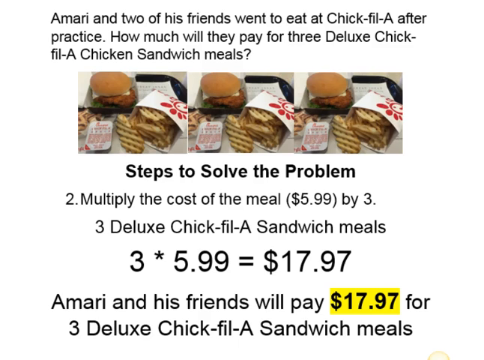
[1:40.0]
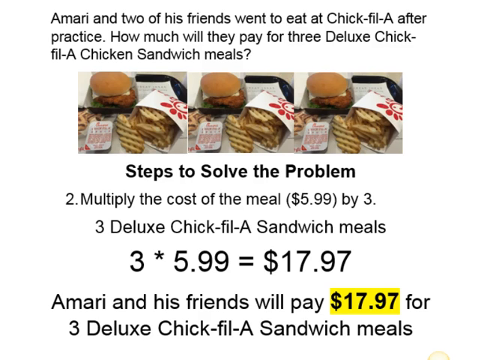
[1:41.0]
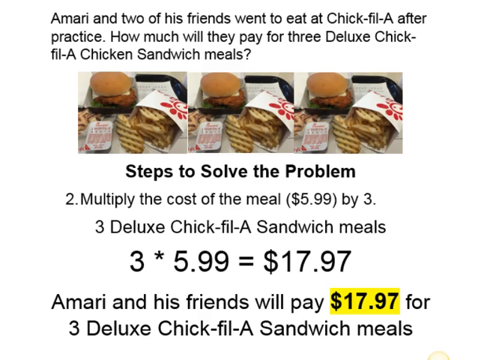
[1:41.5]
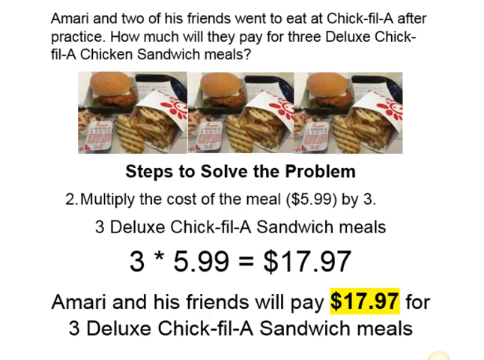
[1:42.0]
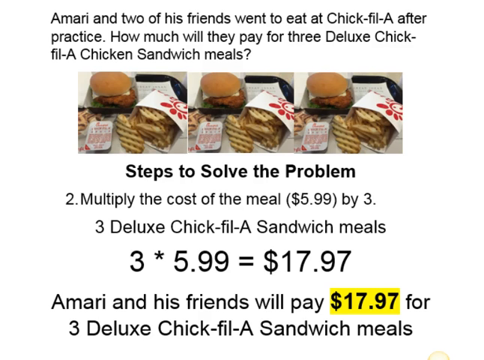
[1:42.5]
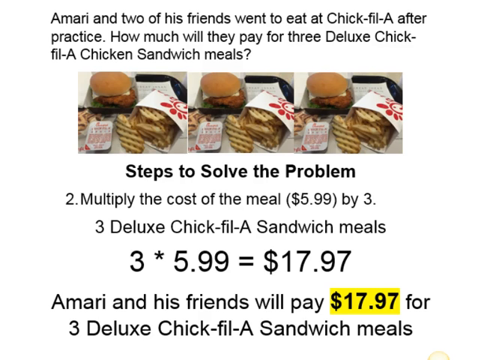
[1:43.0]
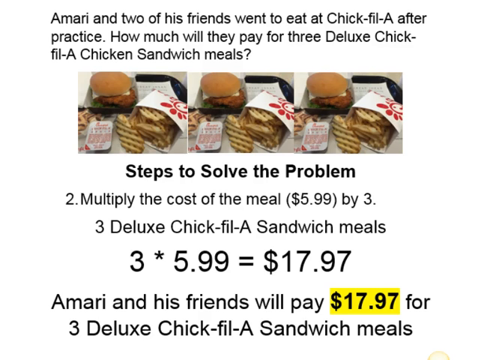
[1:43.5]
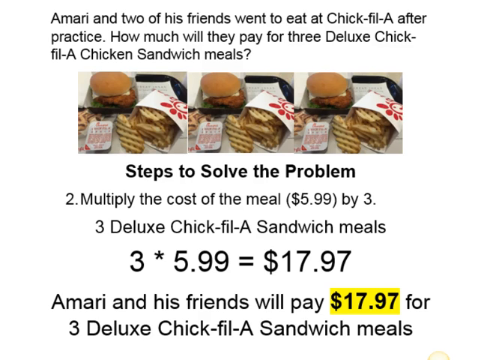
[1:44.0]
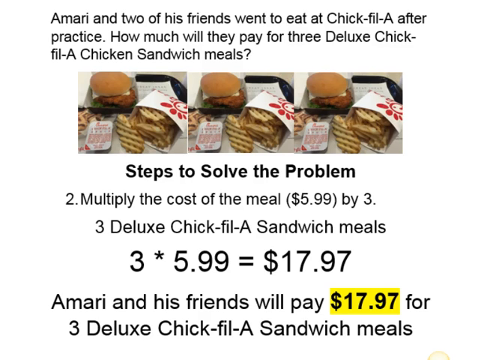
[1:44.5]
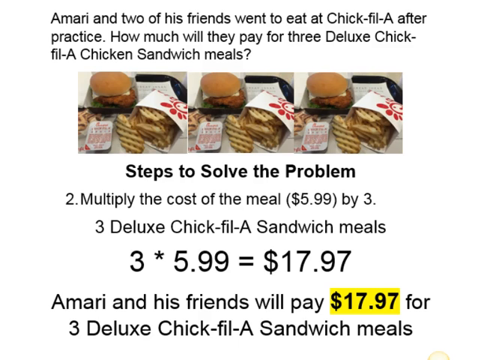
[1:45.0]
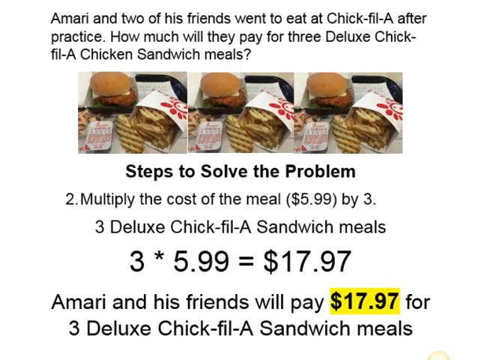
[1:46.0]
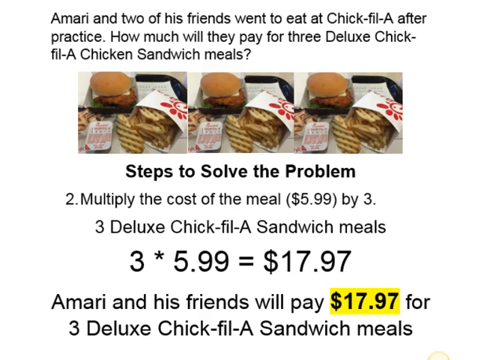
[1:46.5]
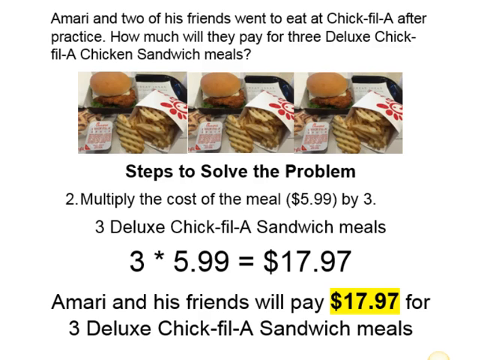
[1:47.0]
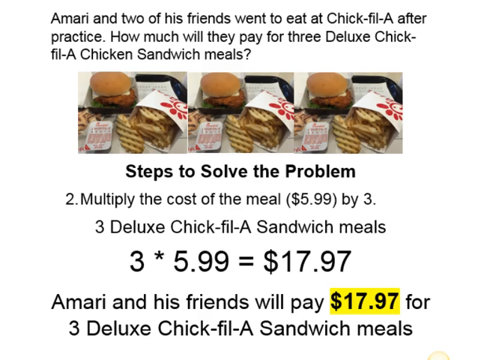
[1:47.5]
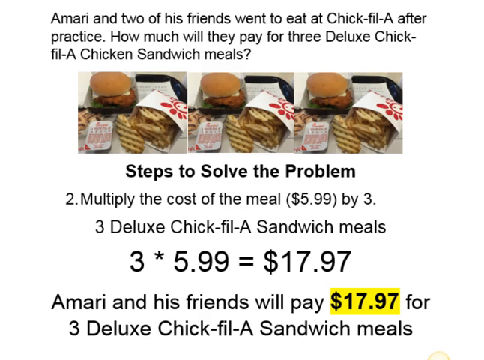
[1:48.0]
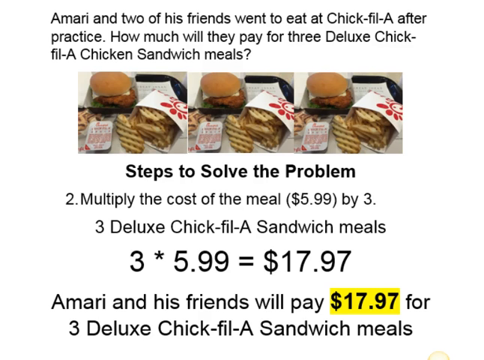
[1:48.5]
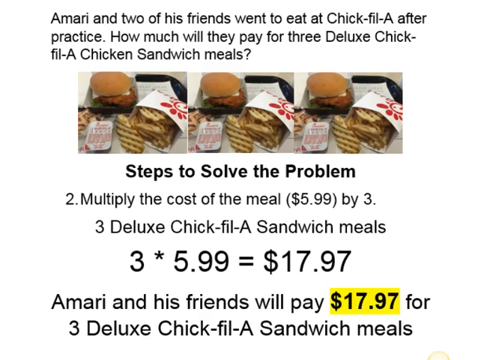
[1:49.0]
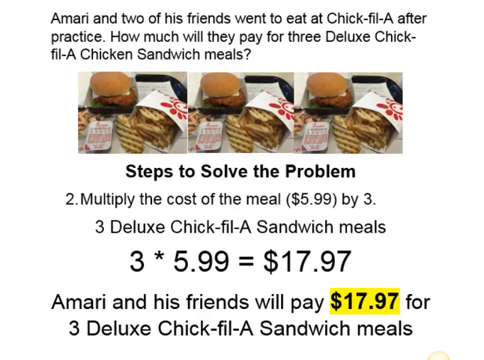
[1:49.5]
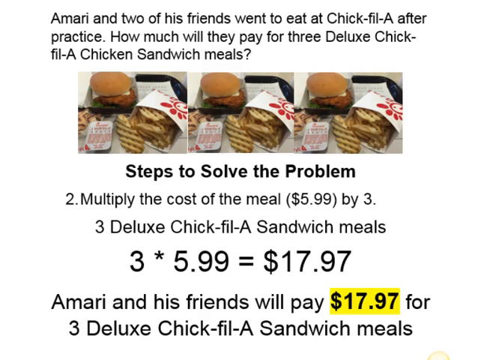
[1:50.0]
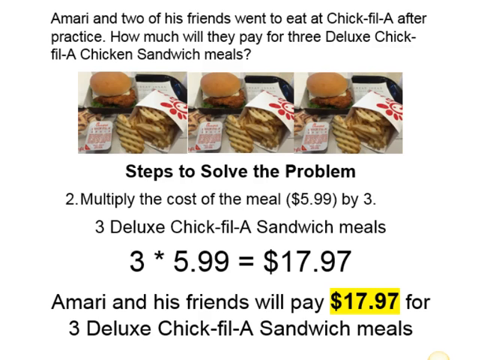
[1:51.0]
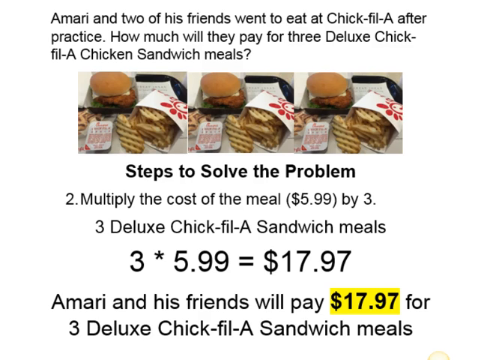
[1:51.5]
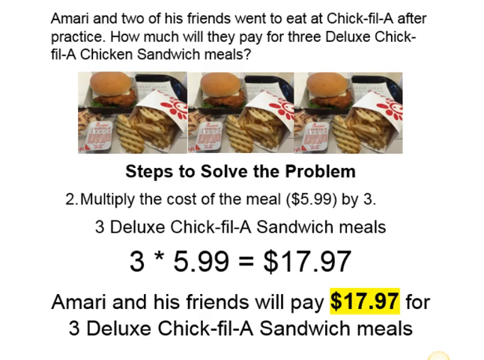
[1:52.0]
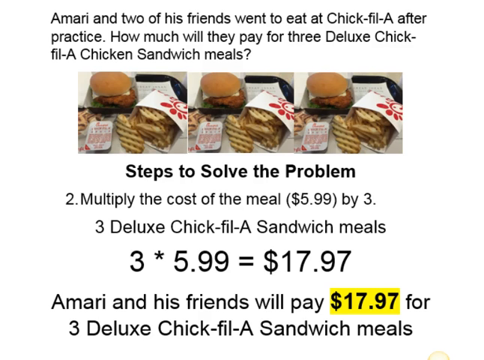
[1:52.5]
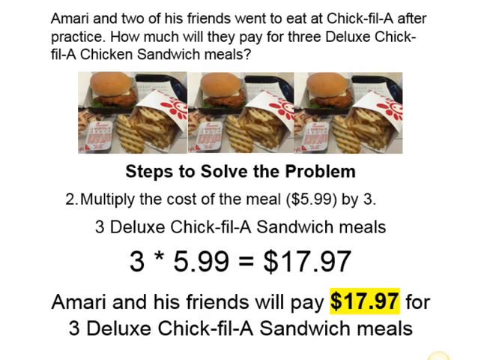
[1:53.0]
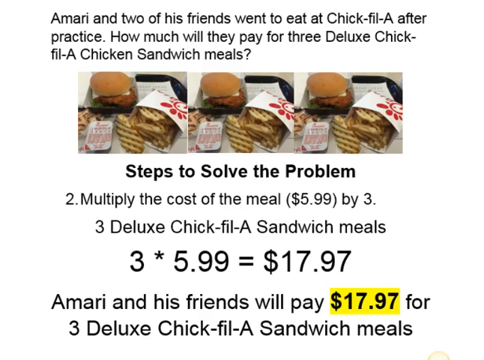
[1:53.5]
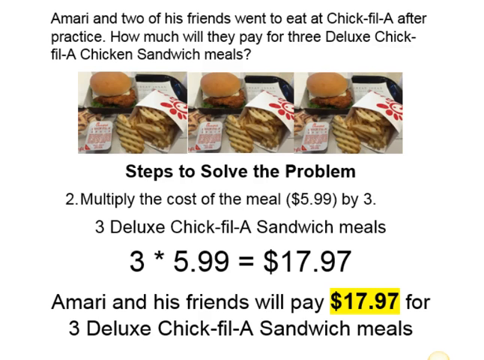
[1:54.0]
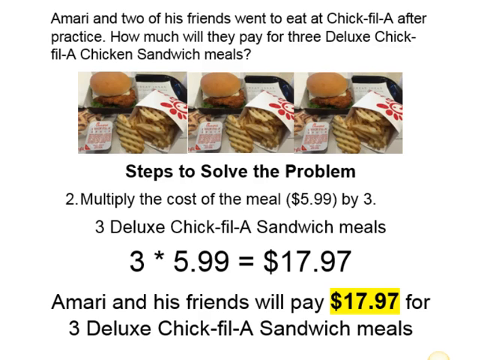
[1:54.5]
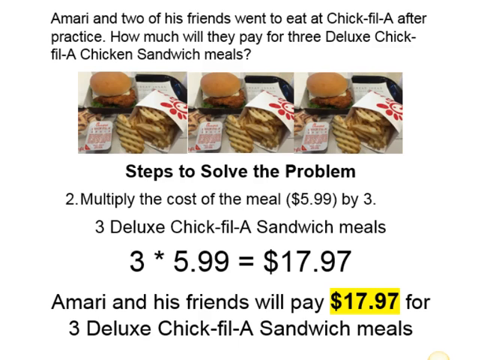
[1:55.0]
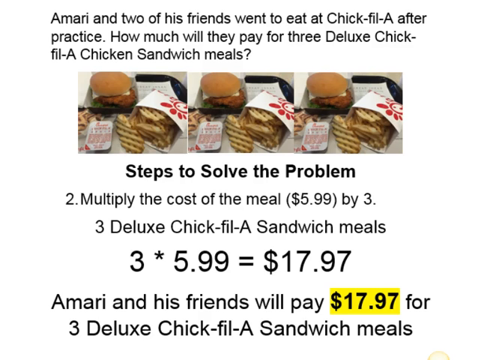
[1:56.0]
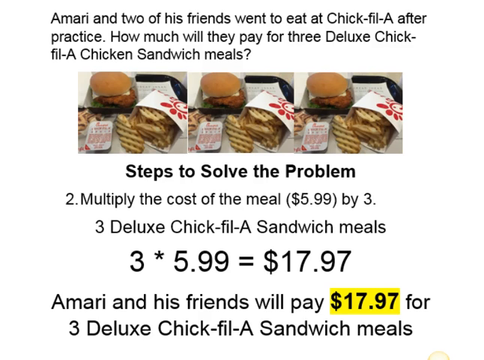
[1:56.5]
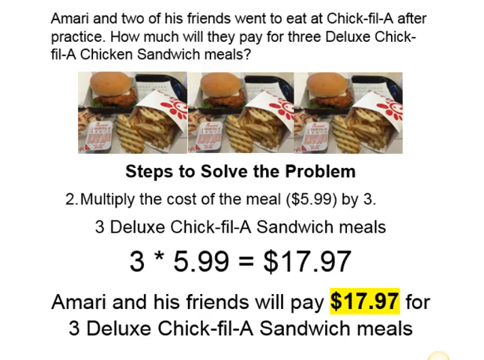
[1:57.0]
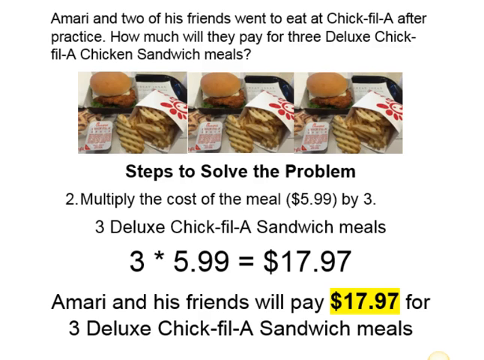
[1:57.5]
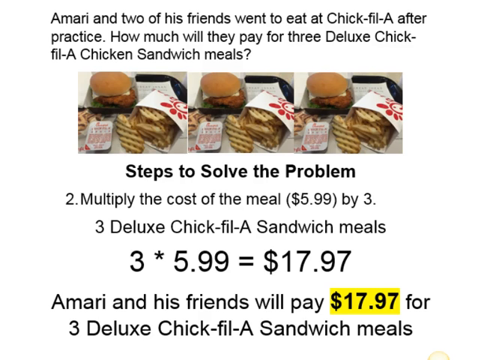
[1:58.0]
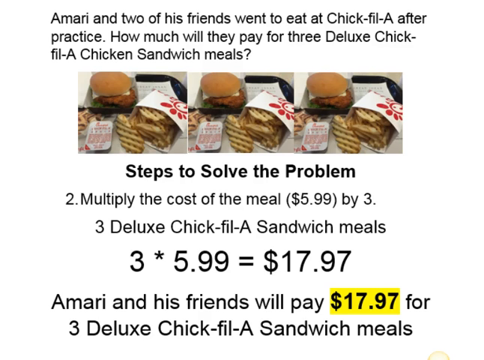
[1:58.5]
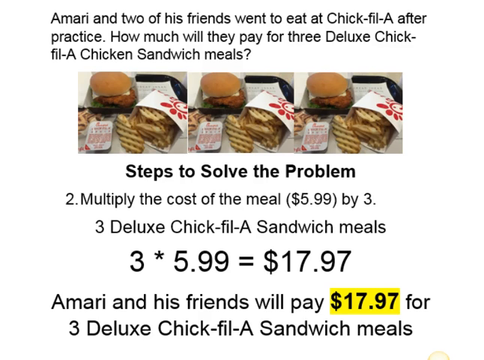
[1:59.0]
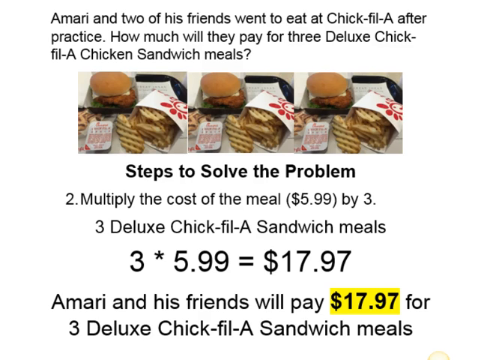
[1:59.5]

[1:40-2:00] The three pictures of the Chick-fil-A meals are side by side, each with a chicken sandwich, French fries and a small sauce packet sitting on a black tray. At the top it says "Amari and two of his friends went to eat at Chick-fil-A after practice. How much will they pay for three deluxe Chick-fil-A chicken sandwich meals?" Underneath the pictures are the steps to solve the problem: number two, "multiply the cost of the meal, $5.99, by three," and number three, "deluxe Chick-fil-A sandwich meals," followed by three with an asterisk, $5.99, equals $17.97. Then "Amari and his friends will pay $17.97 for three deluxe Chick-fil-A meals" appears, with the 17.97 highlighted in yellow marker. Otherwise the screen changes little.